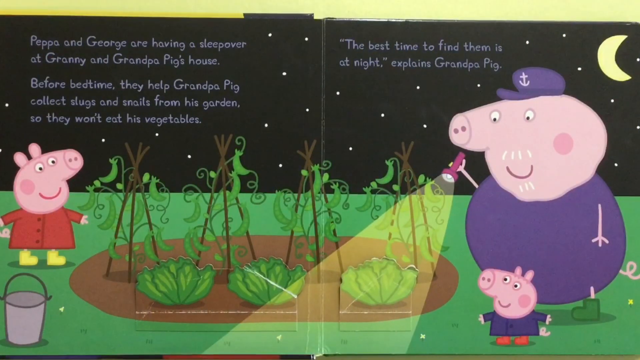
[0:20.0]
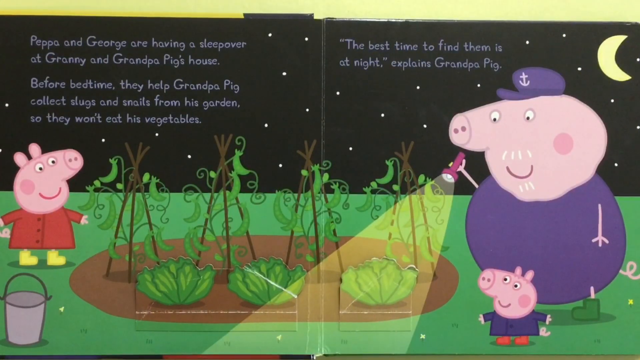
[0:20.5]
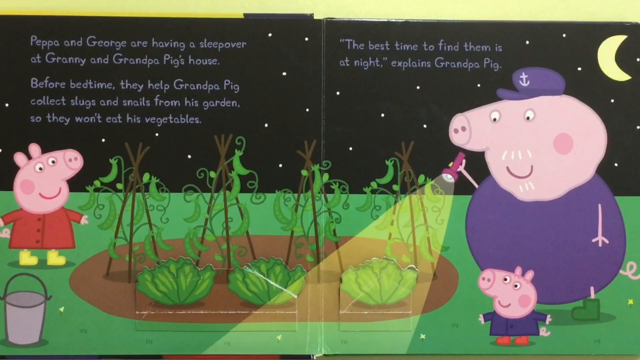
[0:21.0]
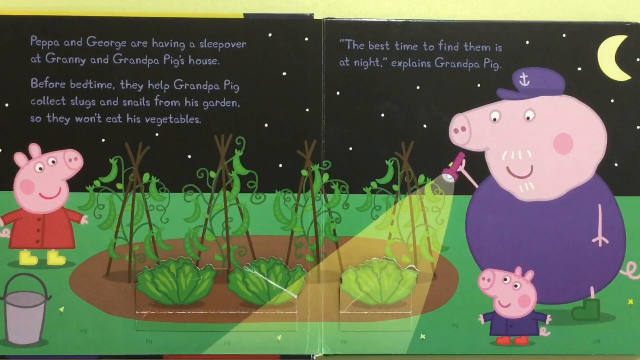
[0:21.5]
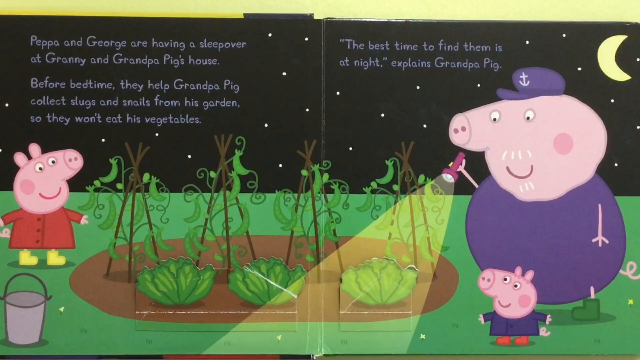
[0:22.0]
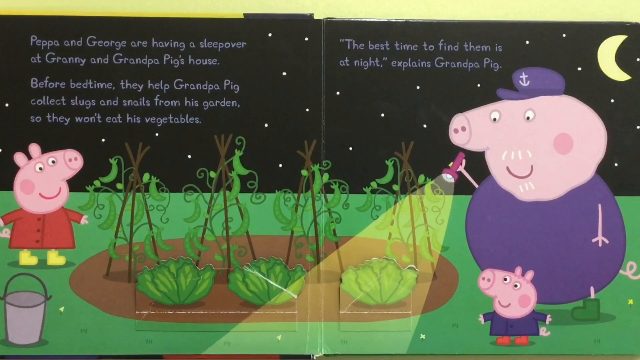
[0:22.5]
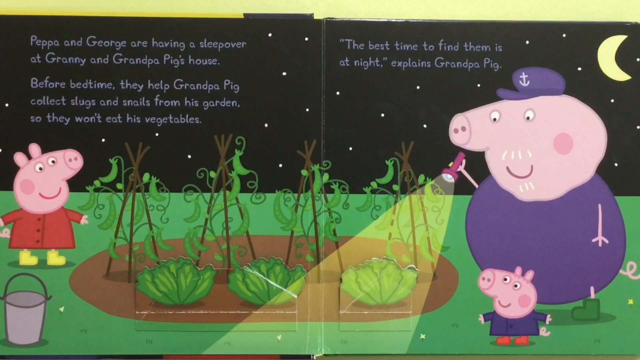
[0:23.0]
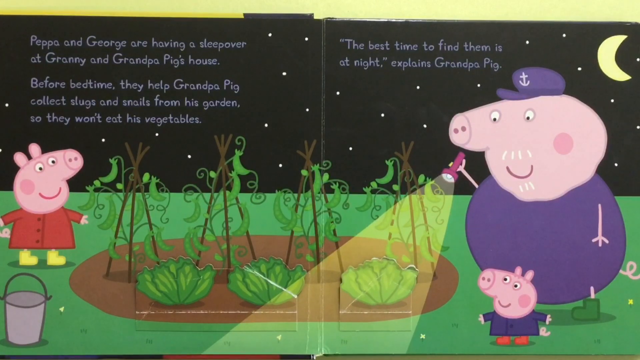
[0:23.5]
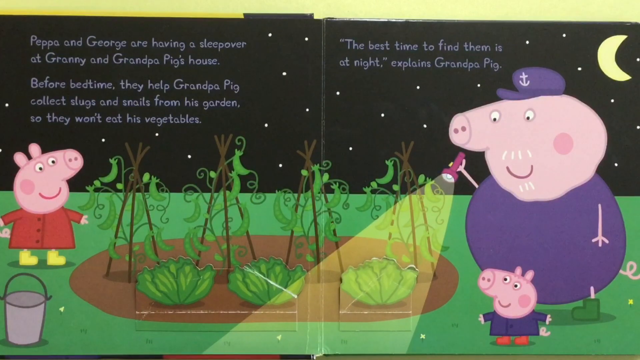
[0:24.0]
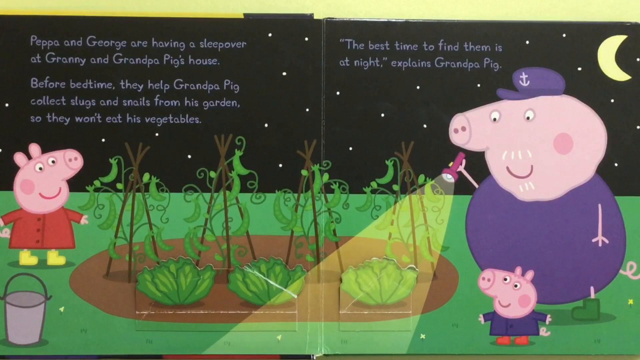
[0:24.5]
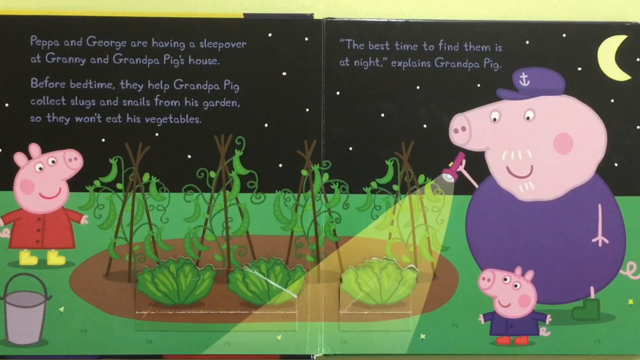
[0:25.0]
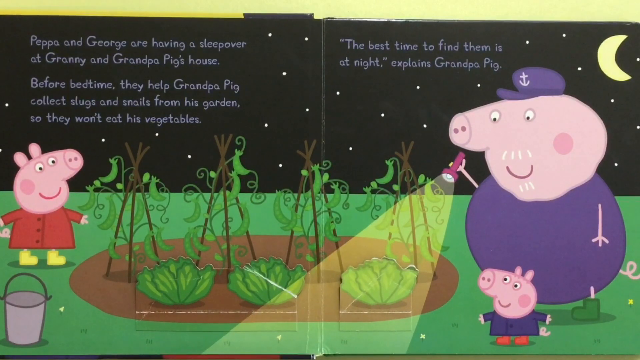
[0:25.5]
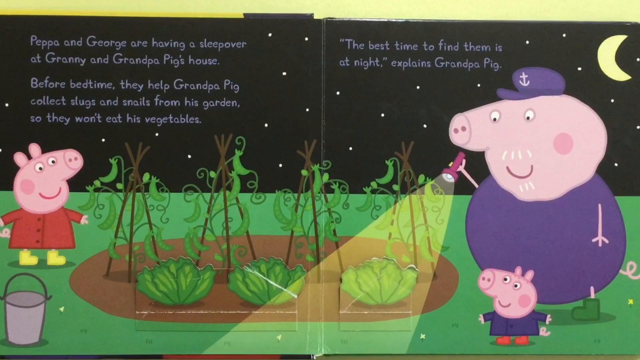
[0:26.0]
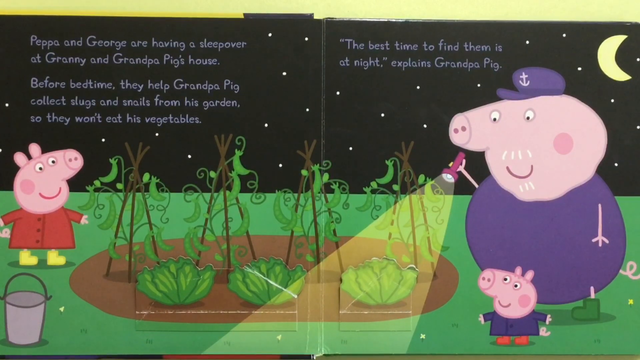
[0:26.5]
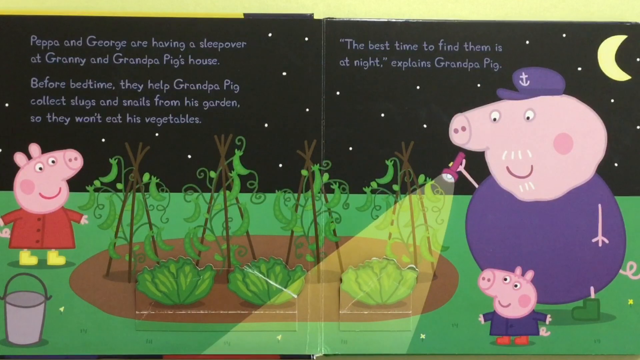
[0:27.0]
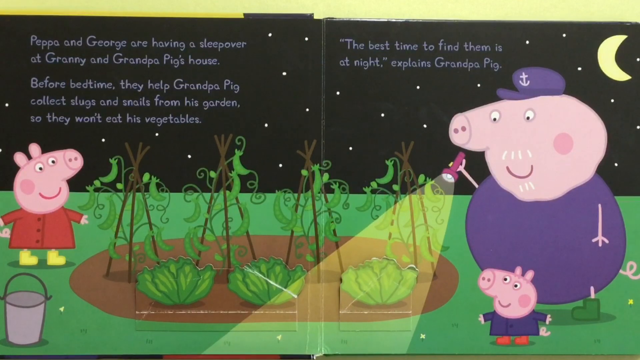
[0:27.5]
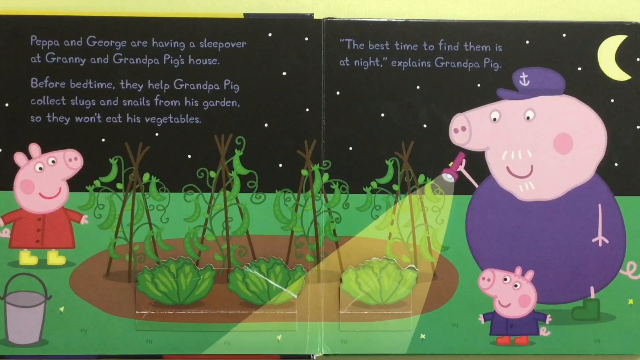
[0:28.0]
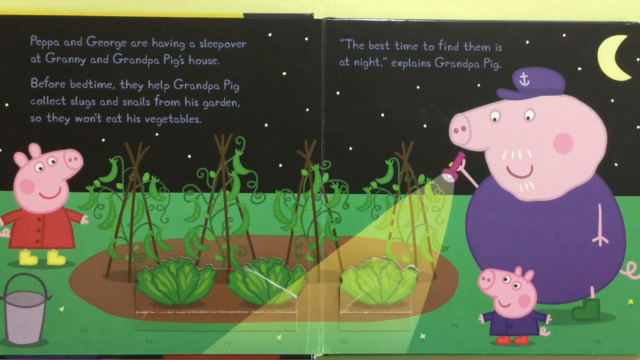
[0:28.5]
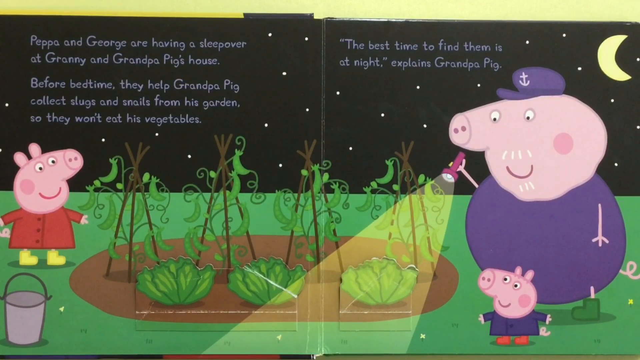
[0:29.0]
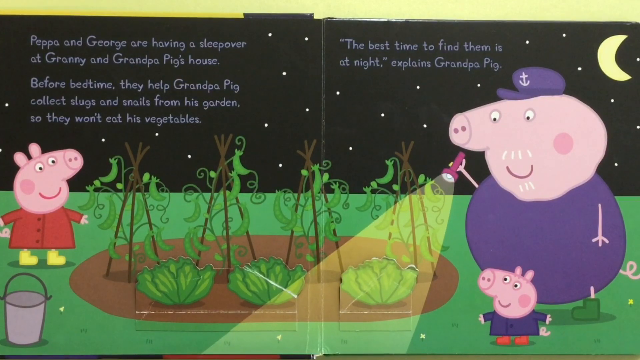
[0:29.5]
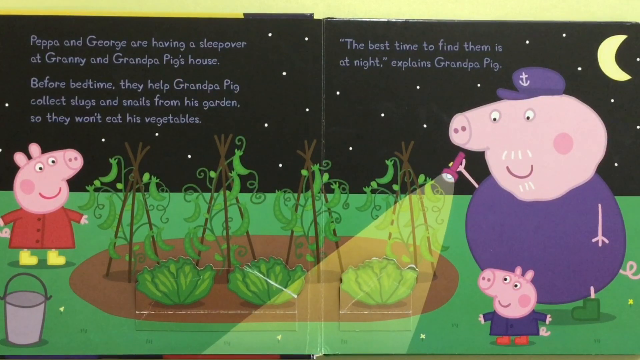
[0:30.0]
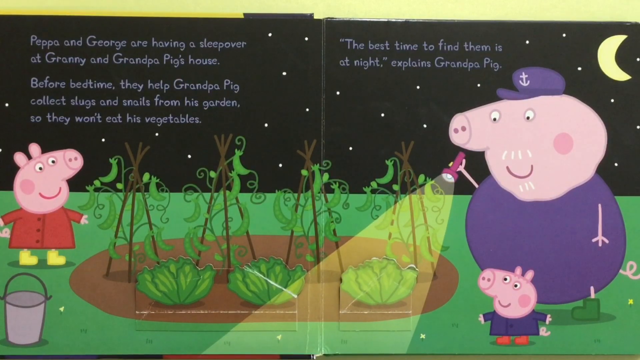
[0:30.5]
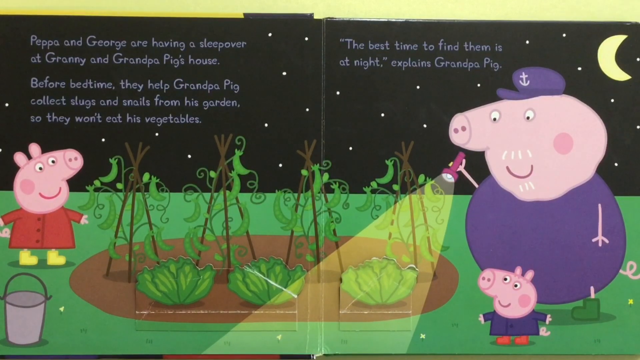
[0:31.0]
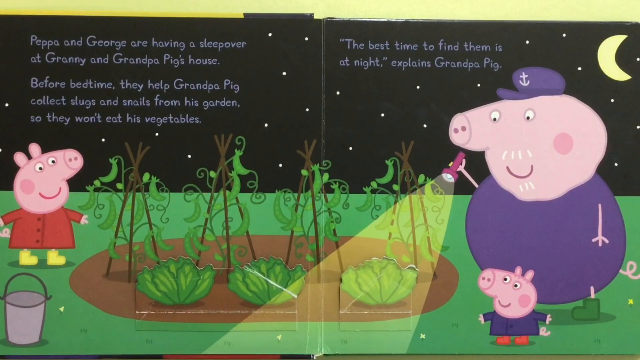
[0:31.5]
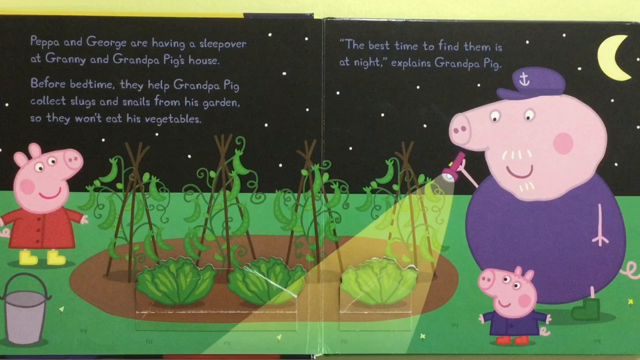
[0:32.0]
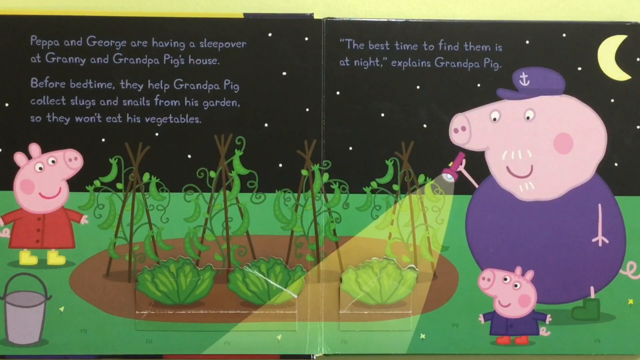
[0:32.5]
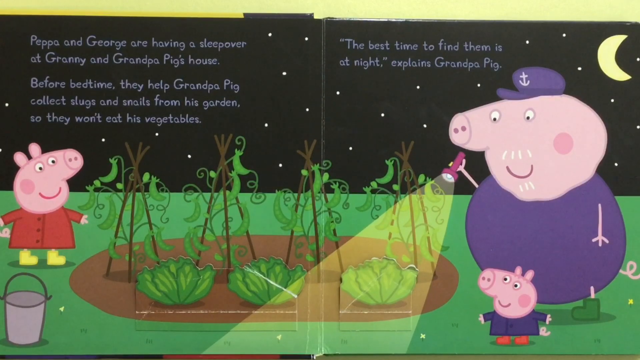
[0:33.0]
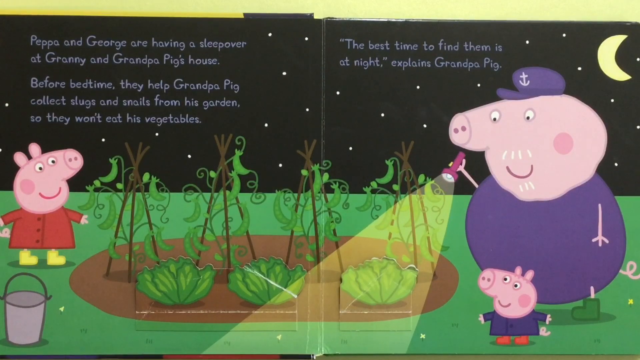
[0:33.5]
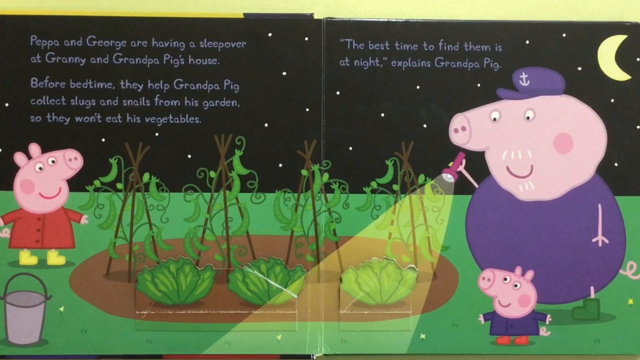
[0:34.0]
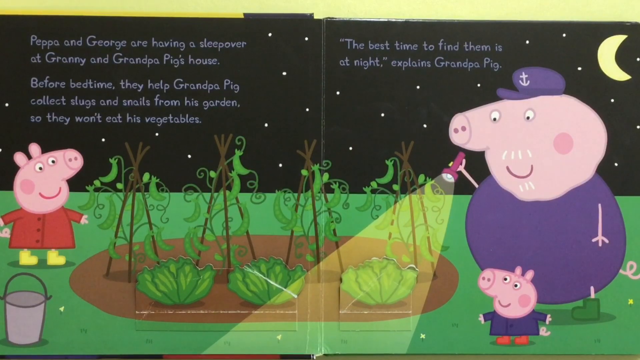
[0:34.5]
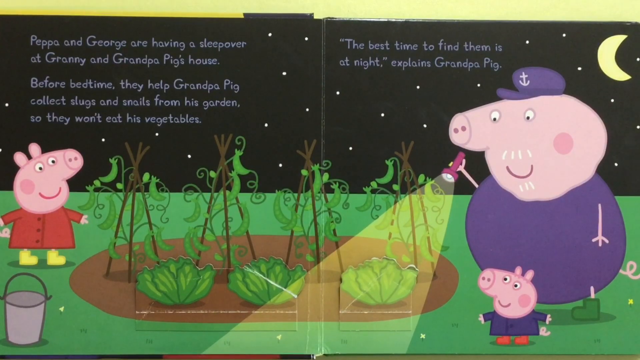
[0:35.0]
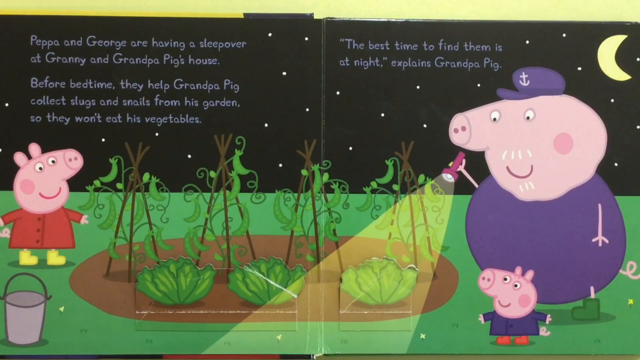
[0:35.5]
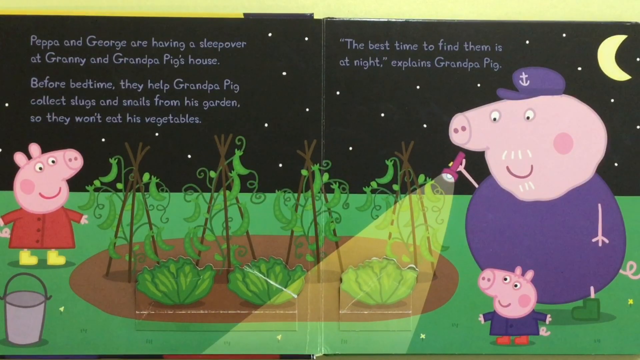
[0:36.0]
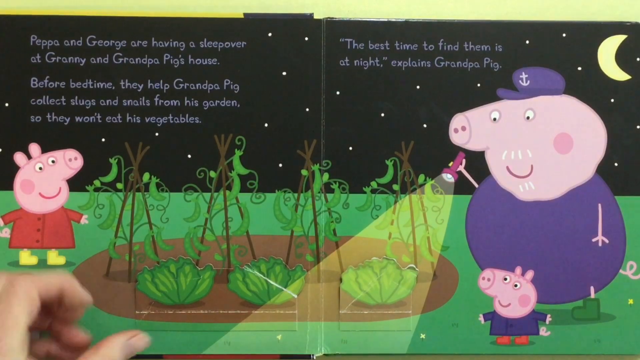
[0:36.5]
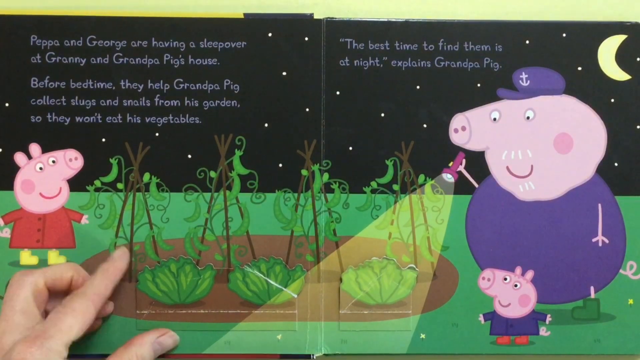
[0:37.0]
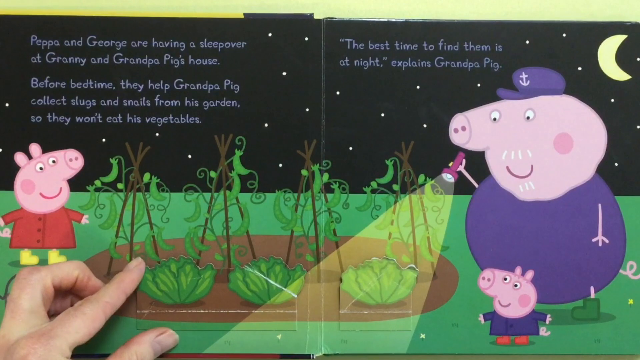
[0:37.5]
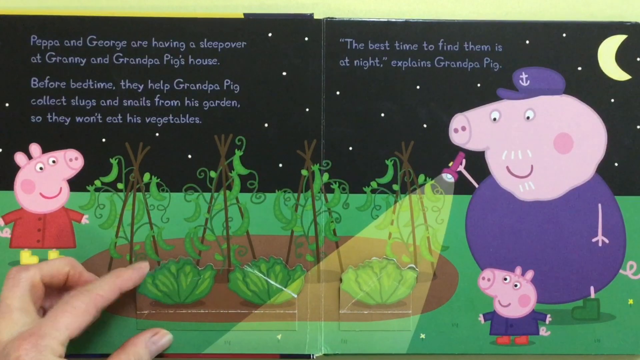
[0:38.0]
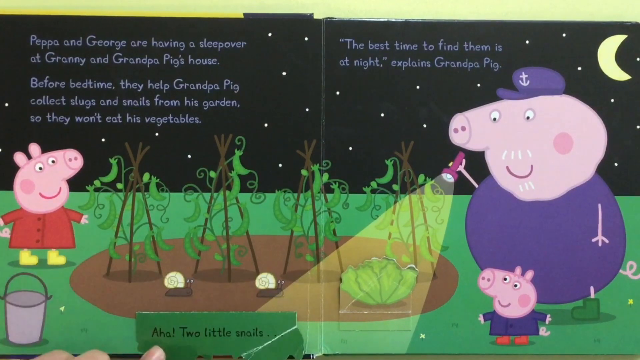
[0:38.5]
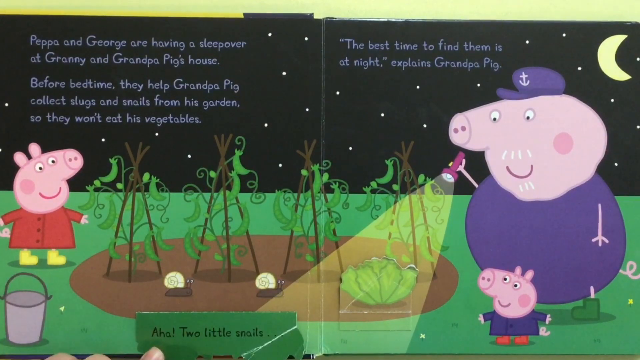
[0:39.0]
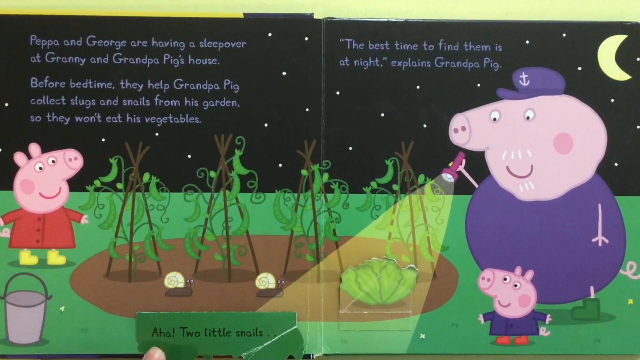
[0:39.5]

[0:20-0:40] The children's book Peppa Pig, Night Creatures, A Lift the Flap Book, is opened. The scene is at night. Peppa Pig is a little girl pig in a red dress and yellow boots. Grandpa Pig is a bigger pig with a purple sailor hat and purple clothes, and a tiny boy pig wears a dark shirt. Grandpa Pig has the flashlight on. The text reads: "Peppa and George are having a sleepover at Granny and Grandpa Pig's house. Before bedtime, they help Grandpa Pig collect slugs and snails from his garden so they won't eat his vegetables. The best time to find them is at night, explains Grandpa Pig." Grandpa Pig shines the flashlight on his cabbage and his peas.